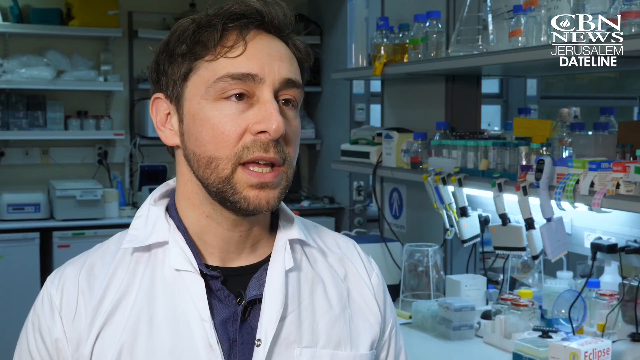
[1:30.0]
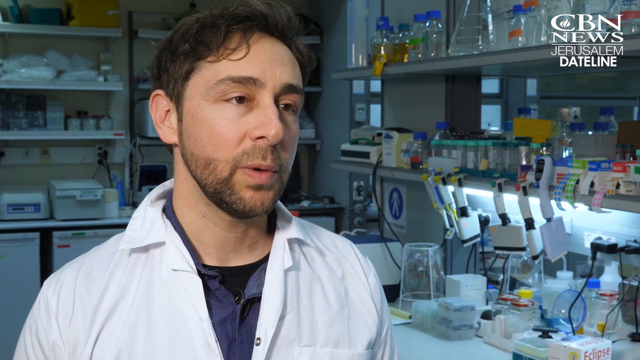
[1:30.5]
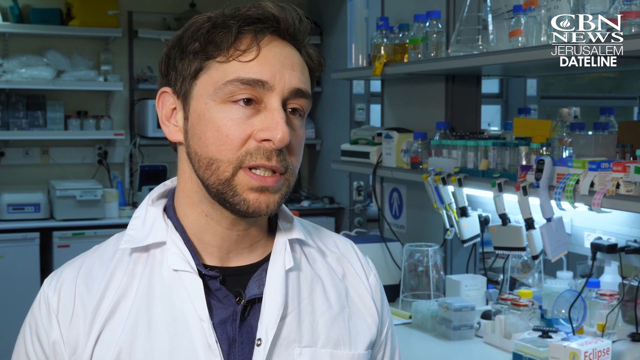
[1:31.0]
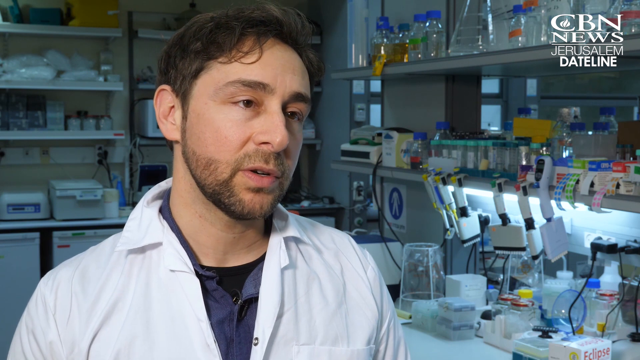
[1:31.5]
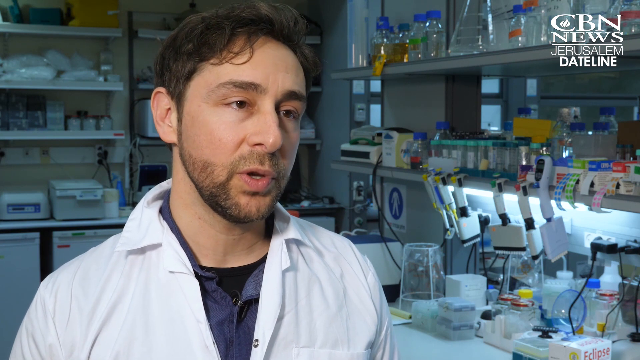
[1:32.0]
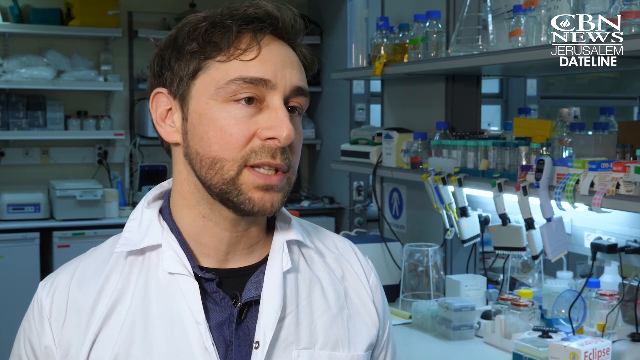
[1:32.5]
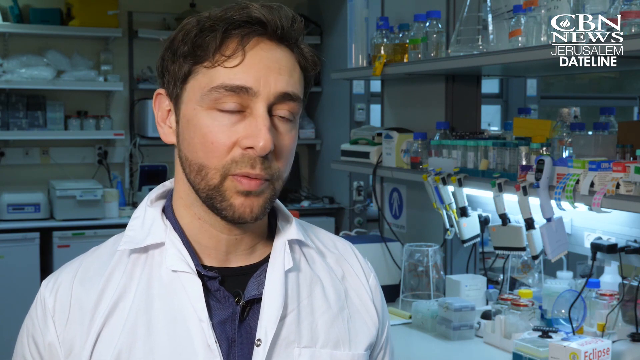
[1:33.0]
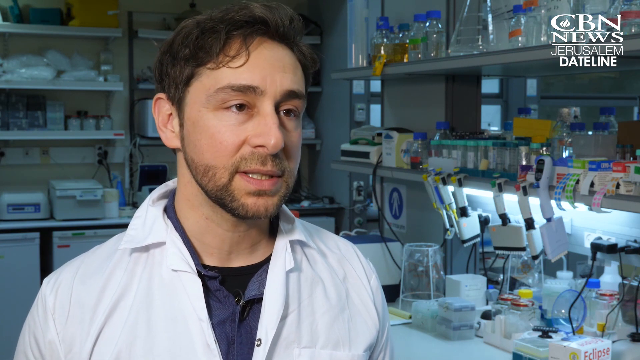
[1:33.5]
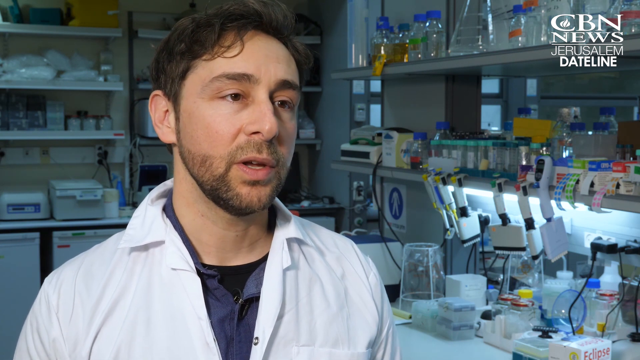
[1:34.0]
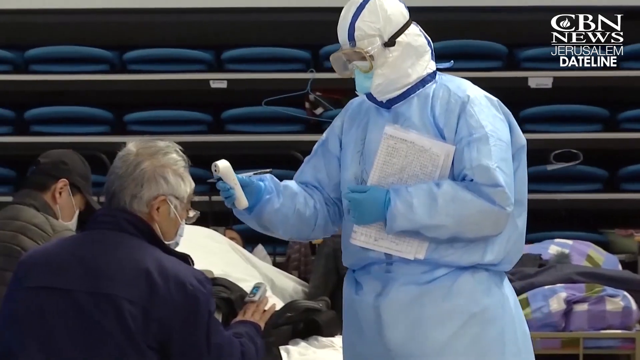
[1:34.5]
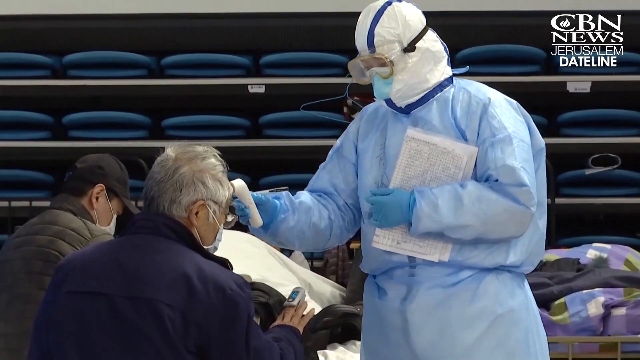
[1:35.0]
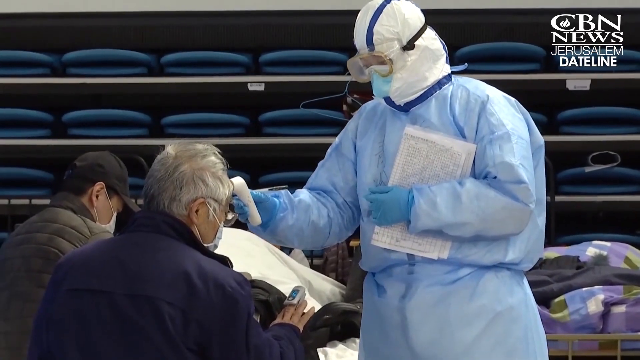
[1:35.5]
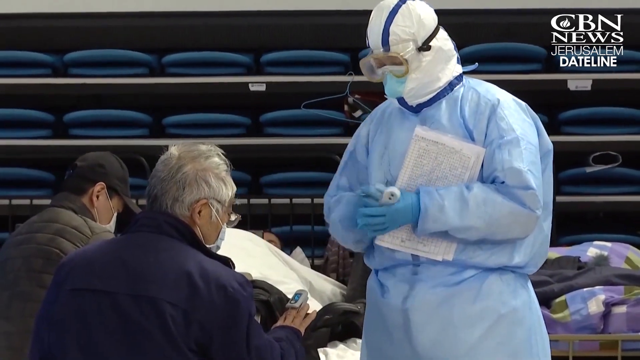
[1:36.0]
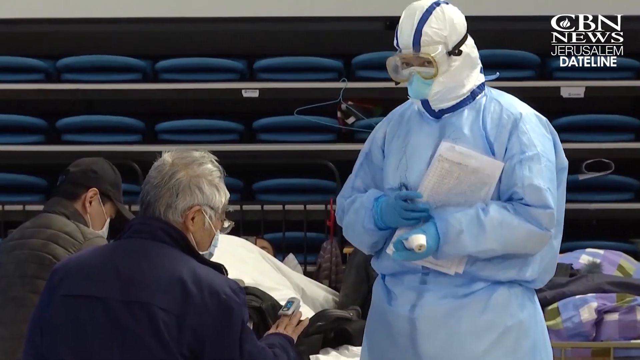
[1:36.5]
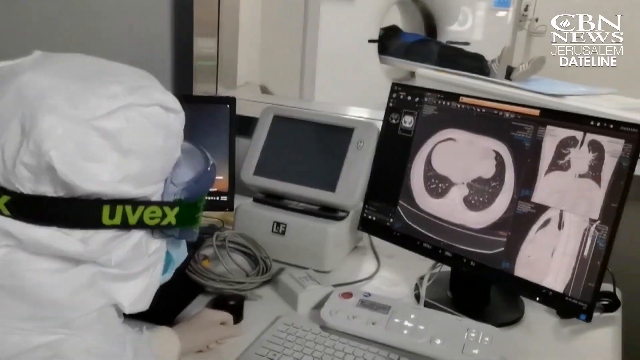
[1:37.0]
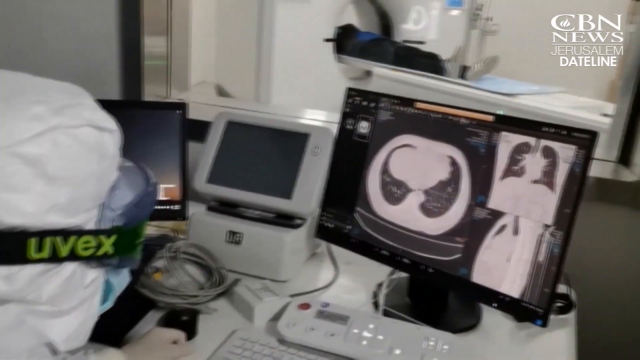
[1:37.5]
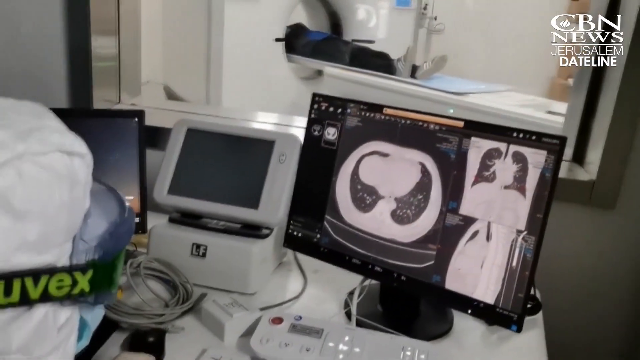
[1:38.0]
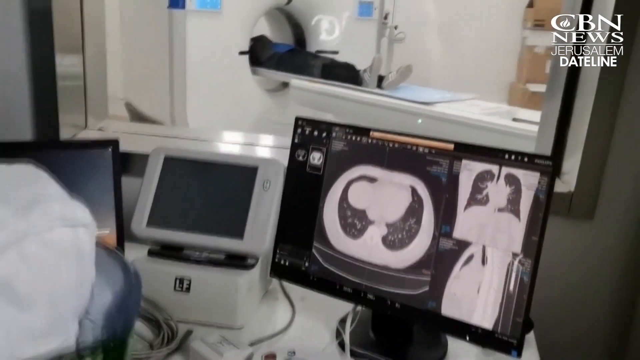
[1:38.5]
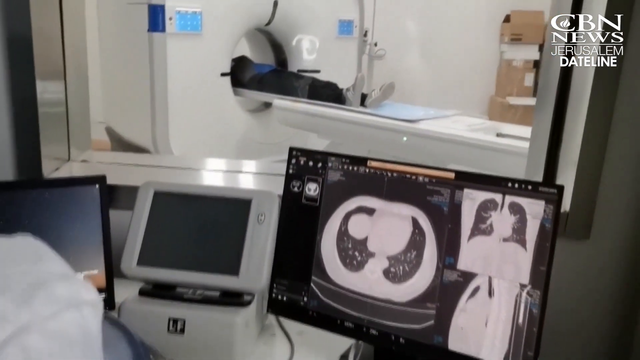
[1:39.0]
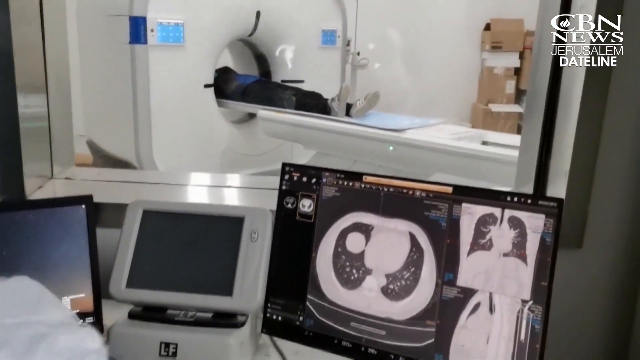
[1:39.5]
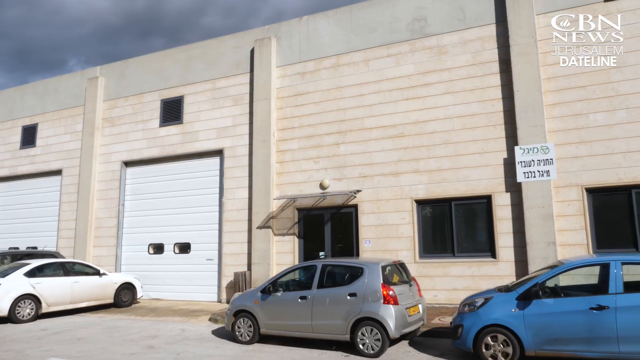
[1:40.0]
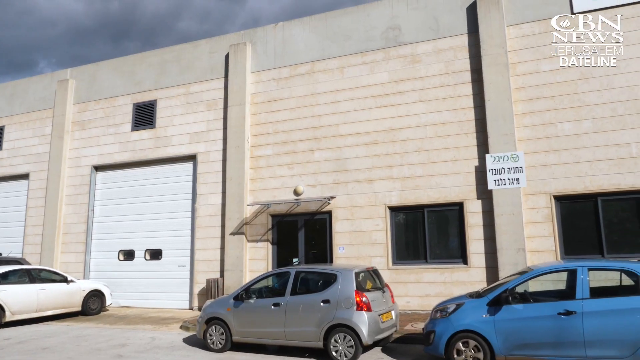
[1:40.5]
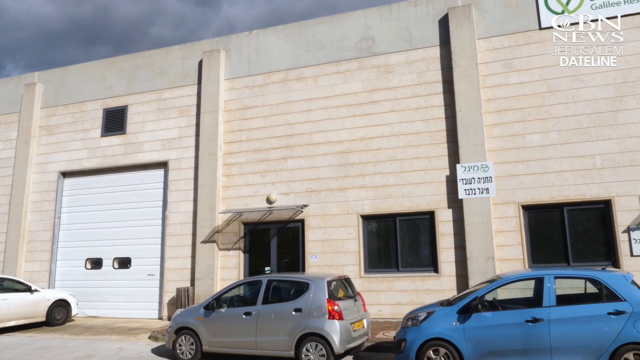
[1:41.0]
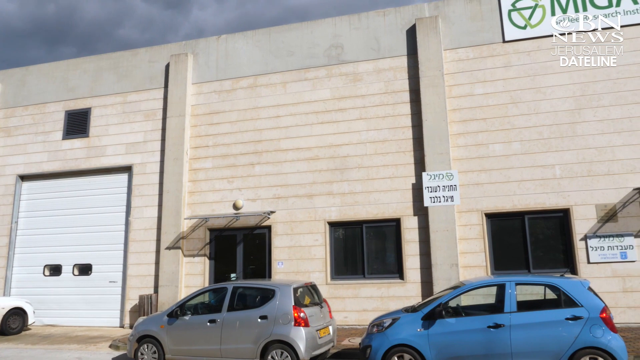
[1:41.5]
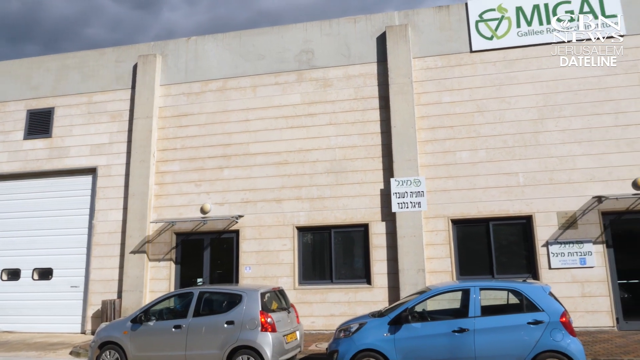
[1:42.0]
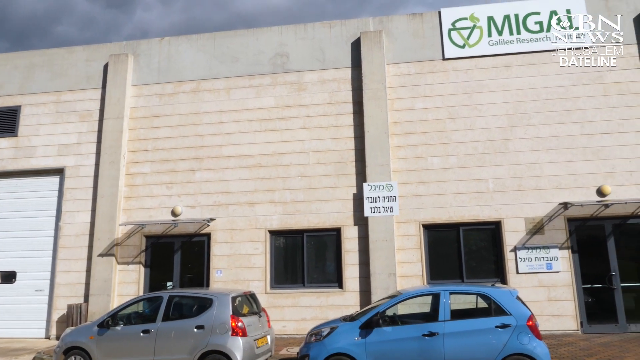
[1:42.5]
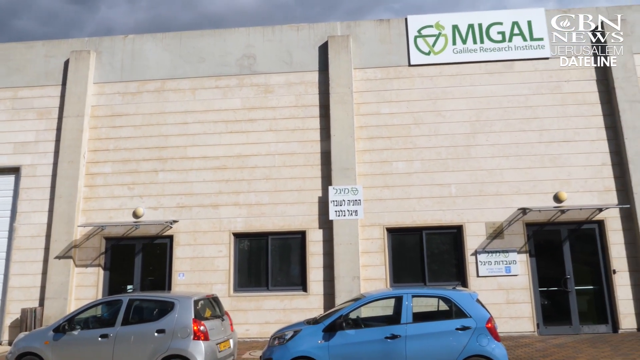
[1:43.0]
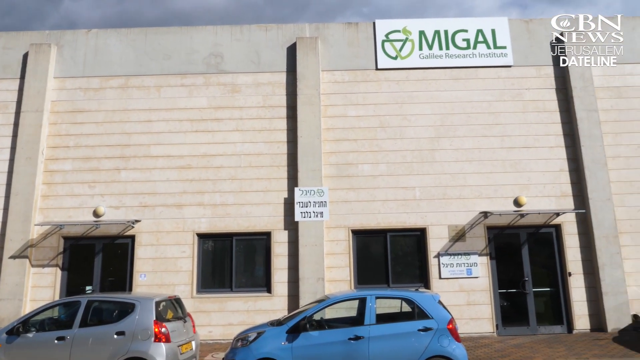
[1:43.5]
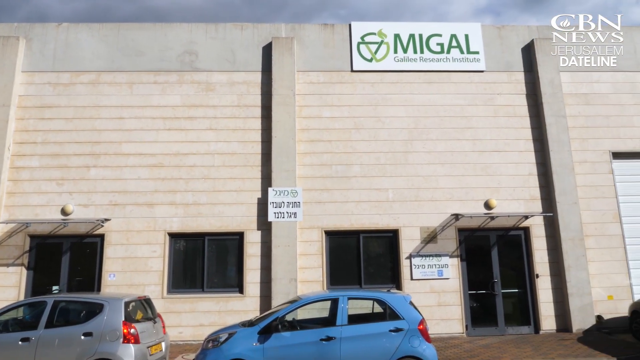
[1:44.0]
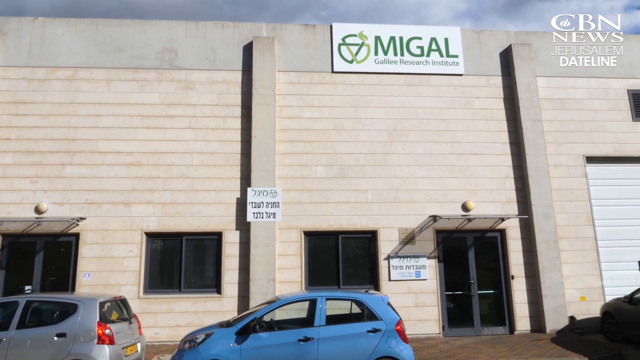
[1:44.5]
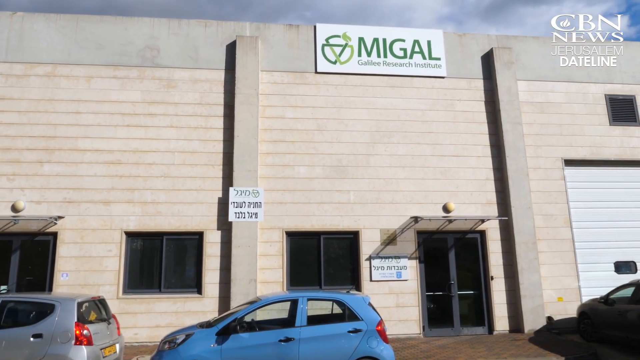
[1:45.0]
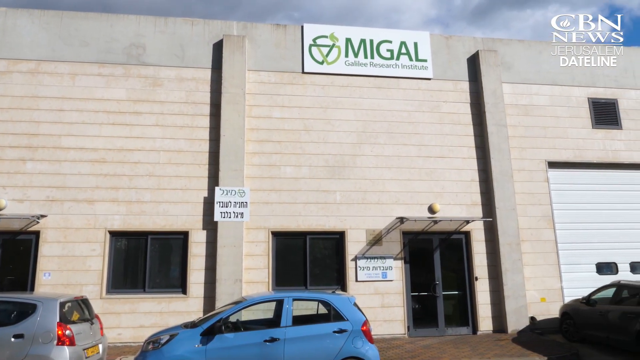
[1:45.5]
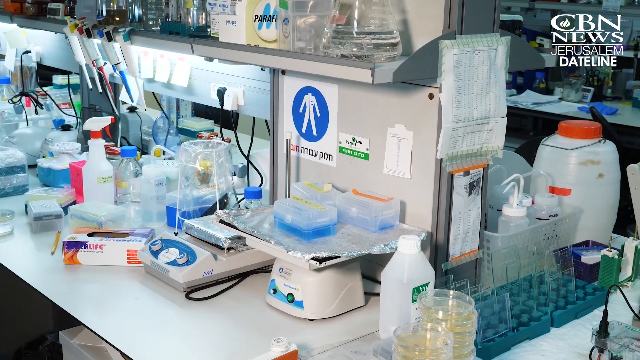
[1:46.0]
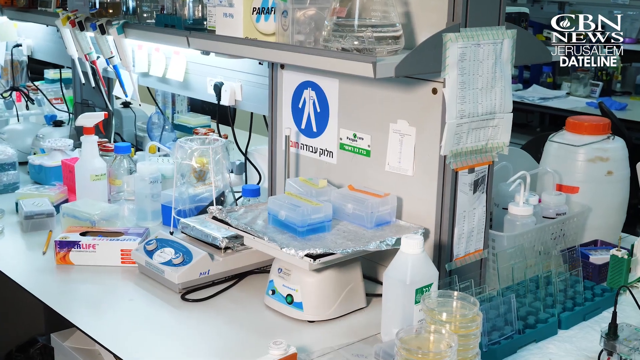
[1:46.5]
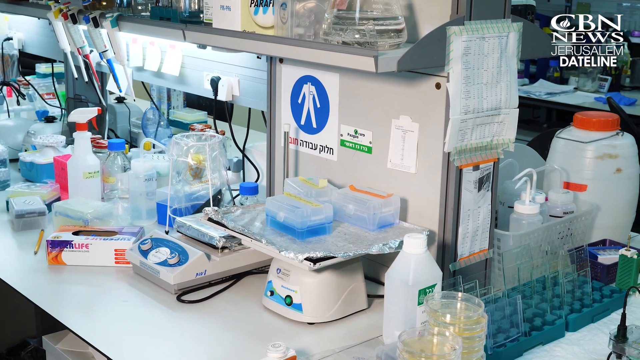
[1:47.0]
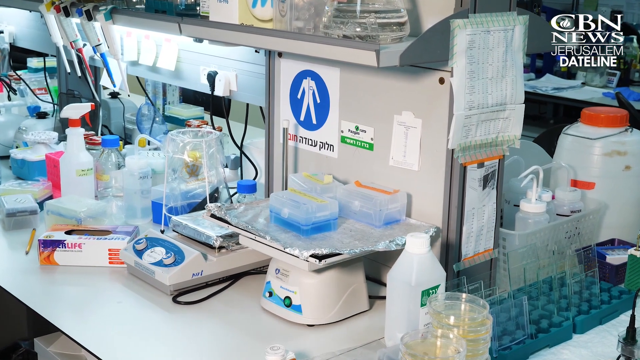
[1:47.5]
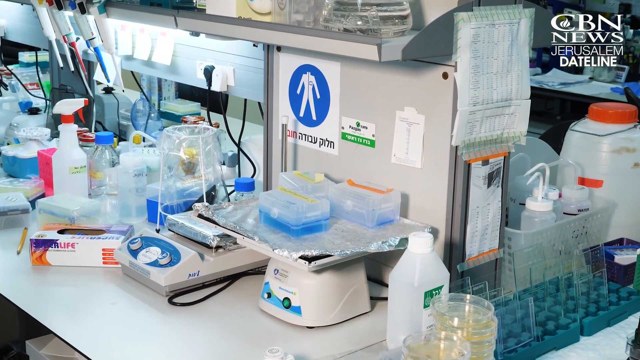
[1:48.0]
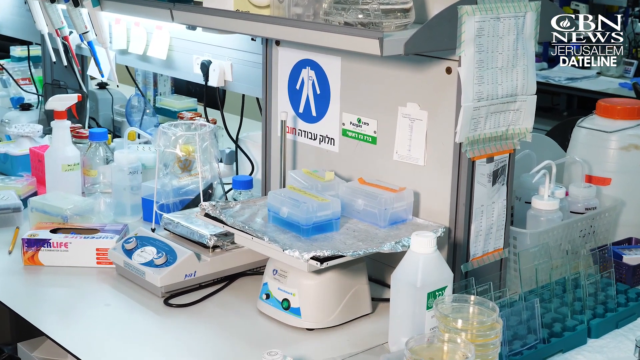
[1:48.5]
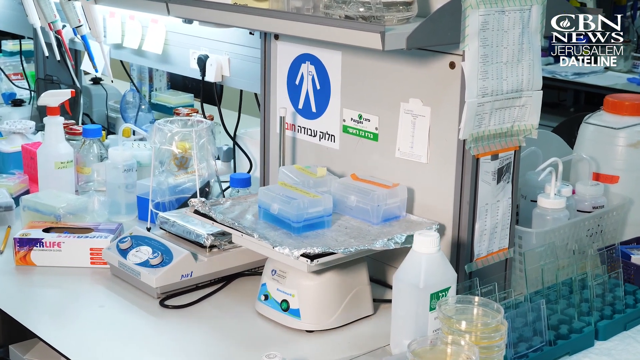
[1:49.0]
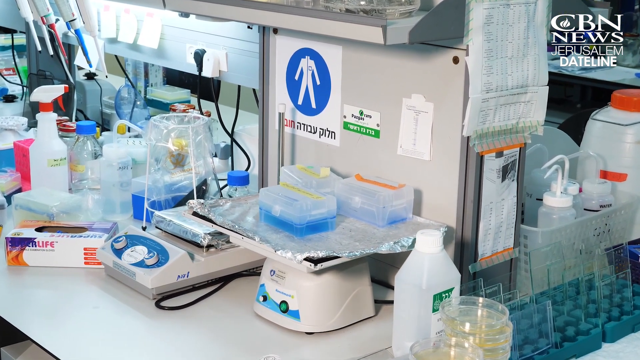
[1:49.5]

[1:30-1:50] The wavy-haired man continues to be interviewed, still talking to the person interviewing him. The video cuts to a man fully covered in a light blue scientist jacket, with a white sort of cover over his face and goggles, who appears to be taking the temperature of different people there. The person whose temperature he takes has sort of silver, springy hair and some sort of device on the middle finger of his right hand, possibly measuring another stat such as blood pressure or pulse. Afterwards someone, apparently the same man, works on a computer, apparently looking at the data he just collected.